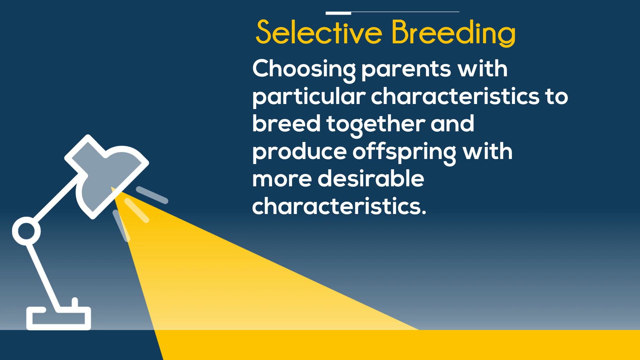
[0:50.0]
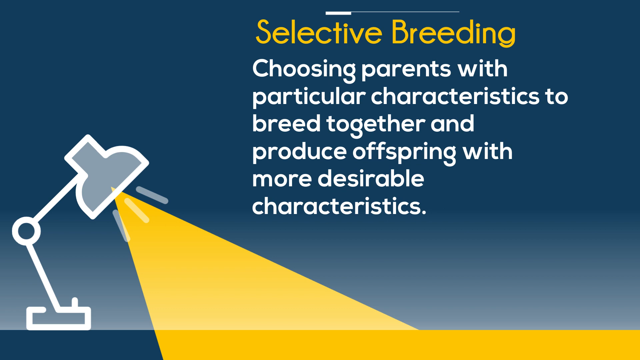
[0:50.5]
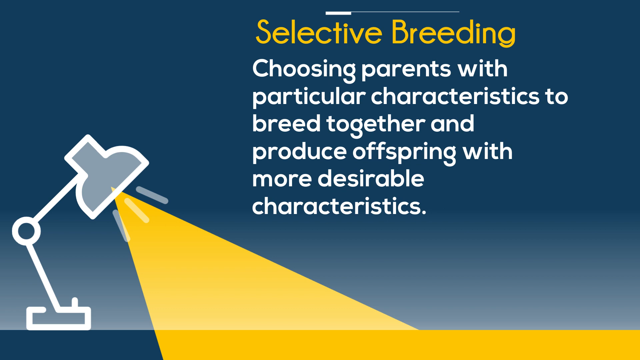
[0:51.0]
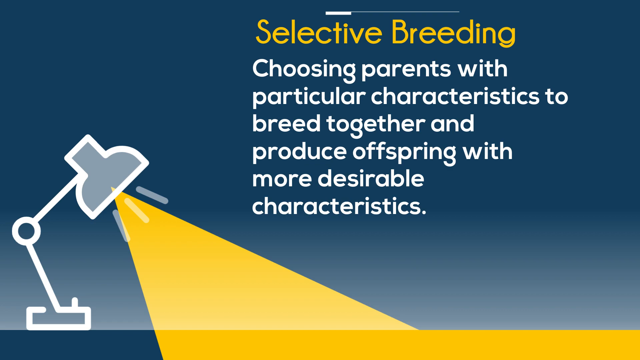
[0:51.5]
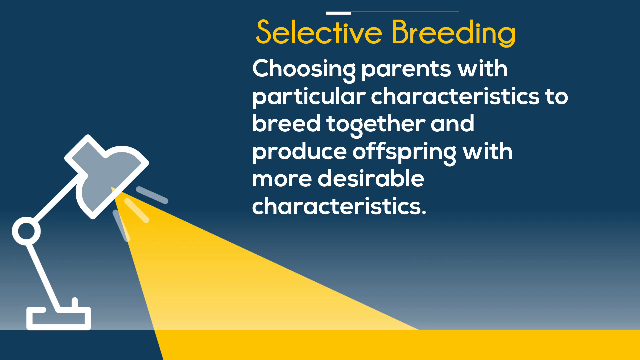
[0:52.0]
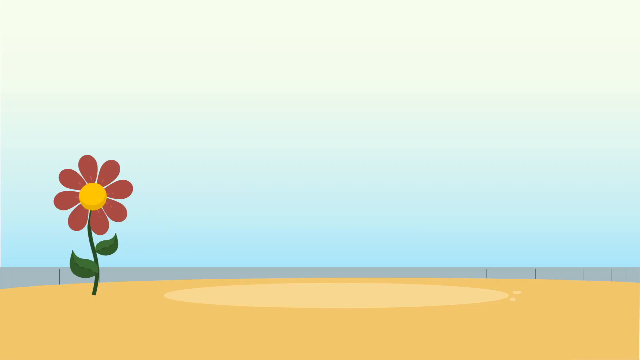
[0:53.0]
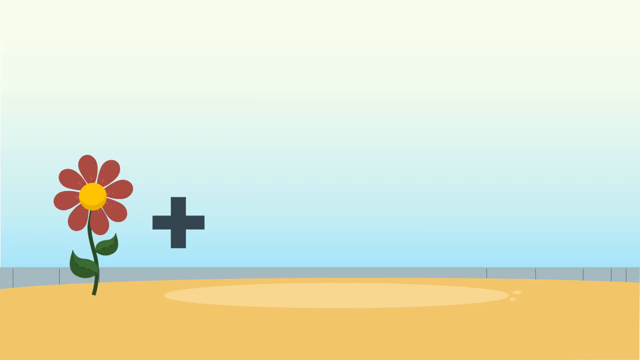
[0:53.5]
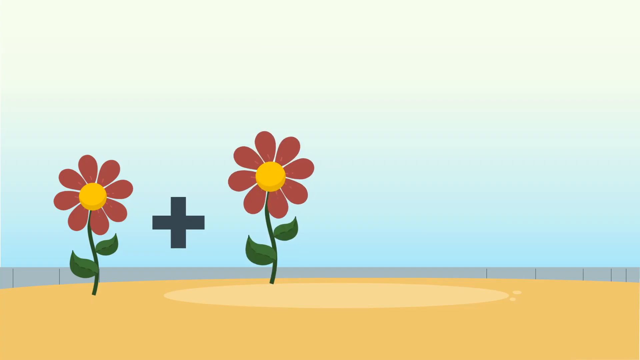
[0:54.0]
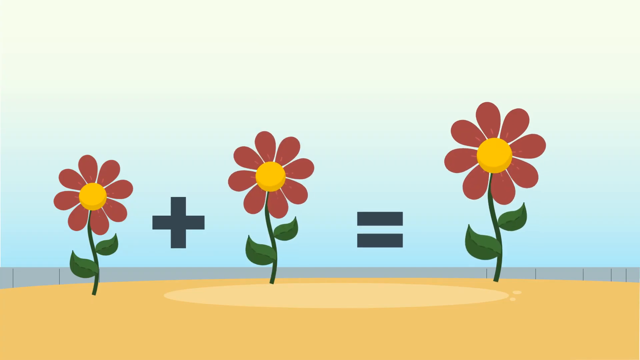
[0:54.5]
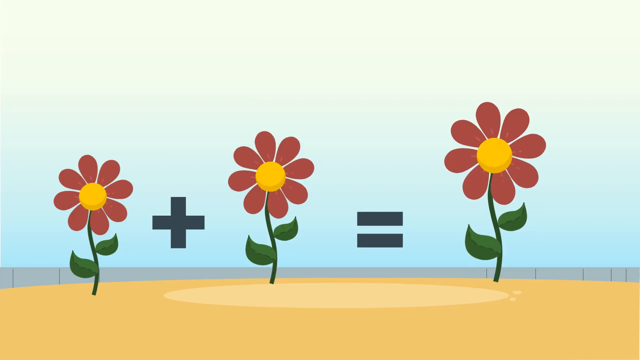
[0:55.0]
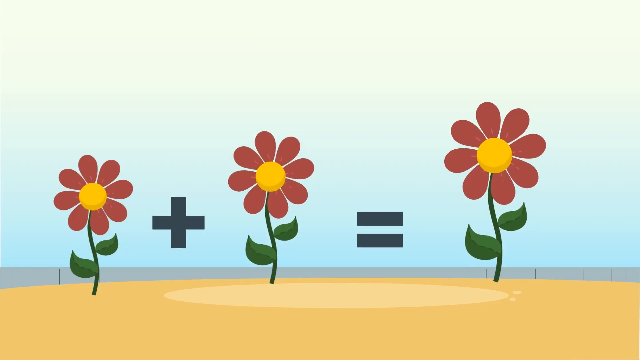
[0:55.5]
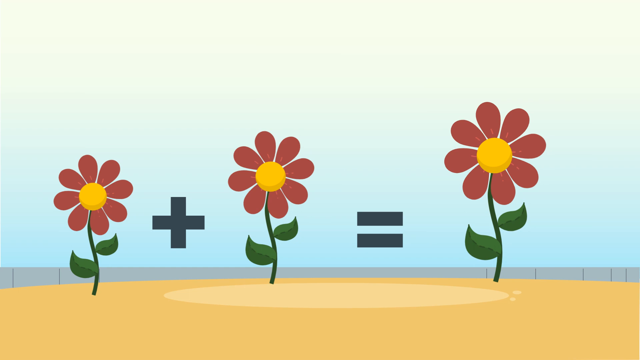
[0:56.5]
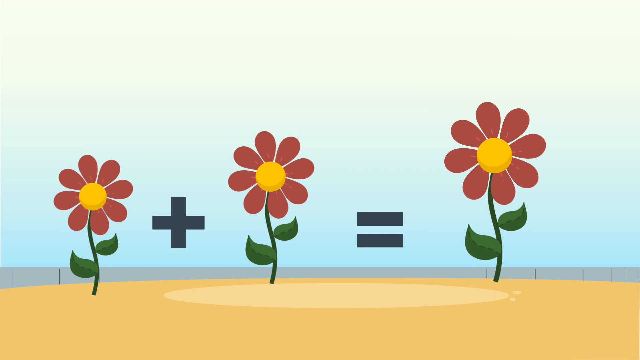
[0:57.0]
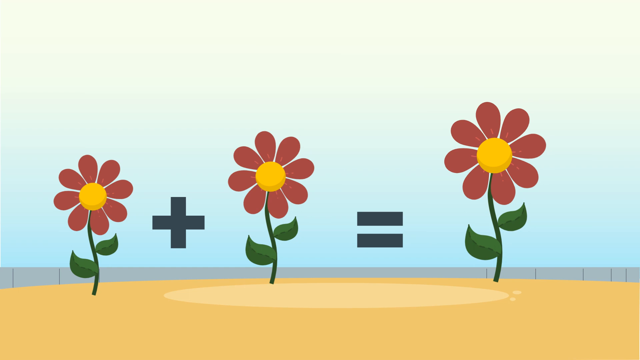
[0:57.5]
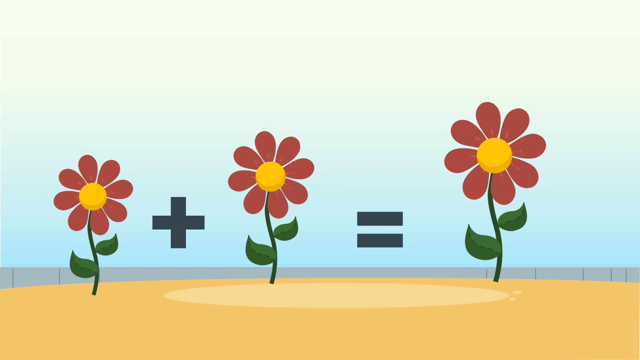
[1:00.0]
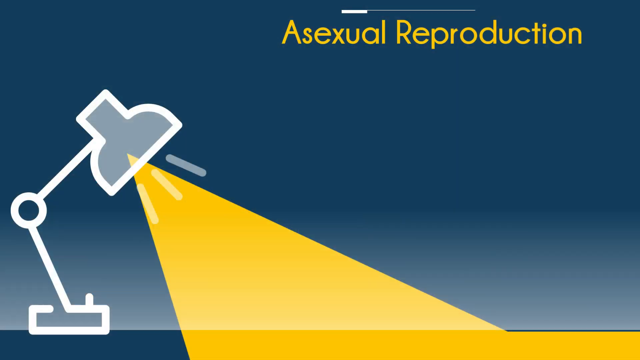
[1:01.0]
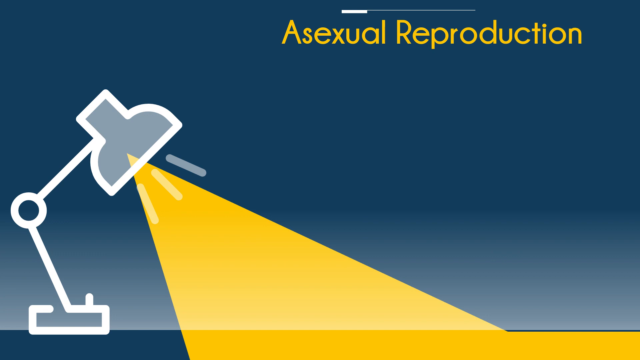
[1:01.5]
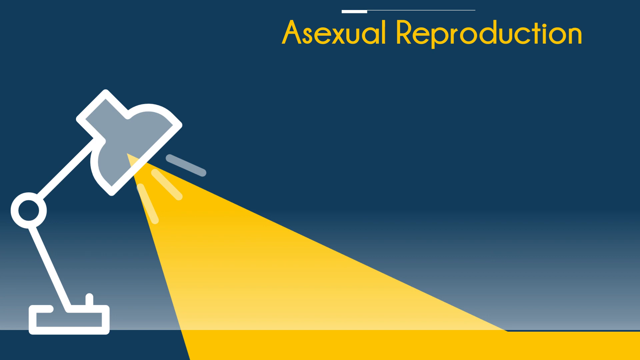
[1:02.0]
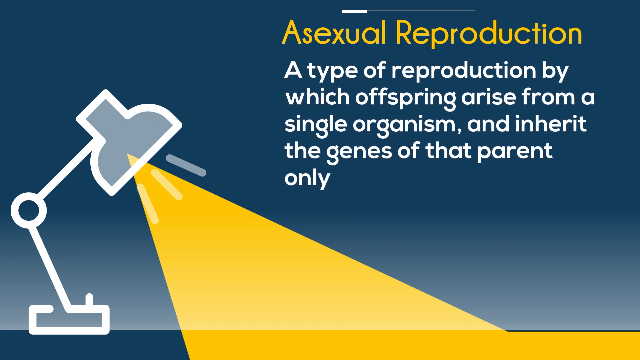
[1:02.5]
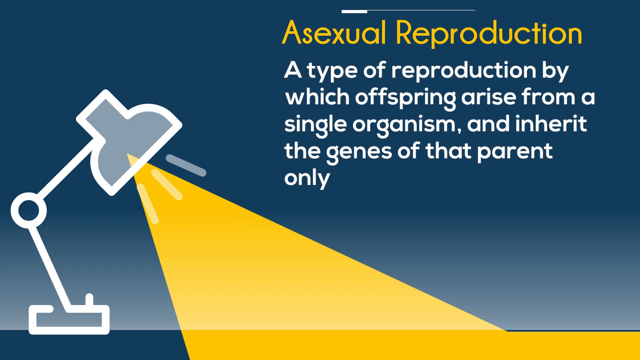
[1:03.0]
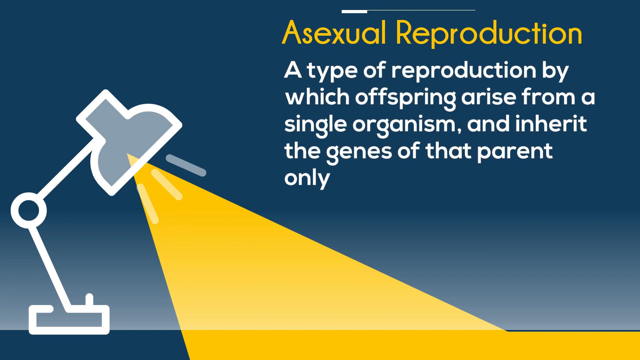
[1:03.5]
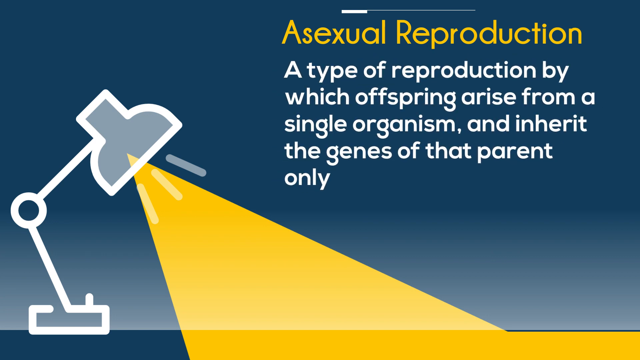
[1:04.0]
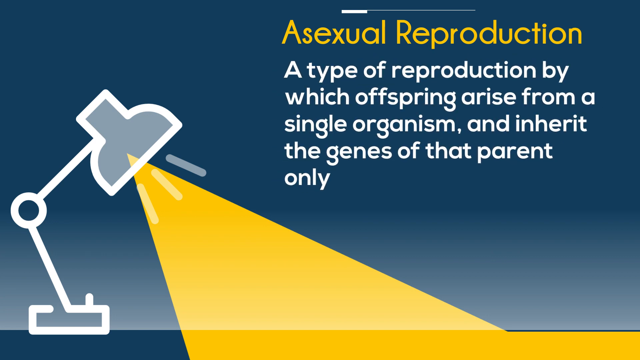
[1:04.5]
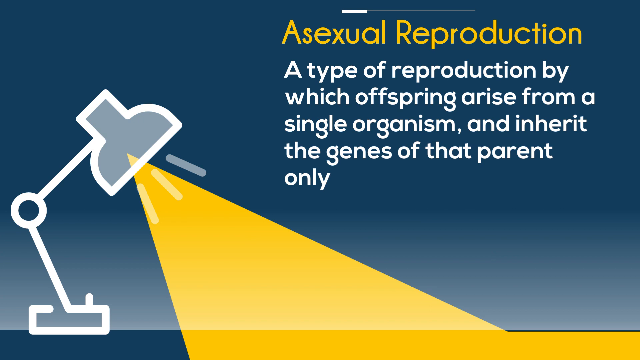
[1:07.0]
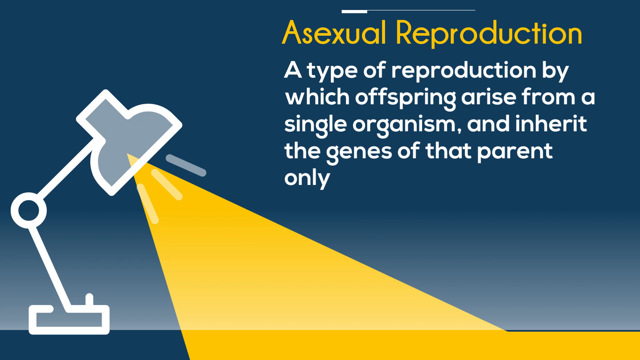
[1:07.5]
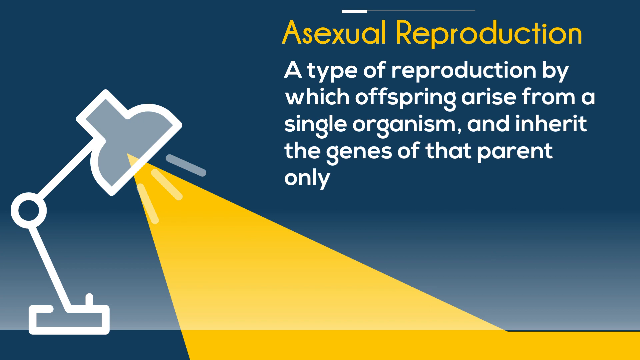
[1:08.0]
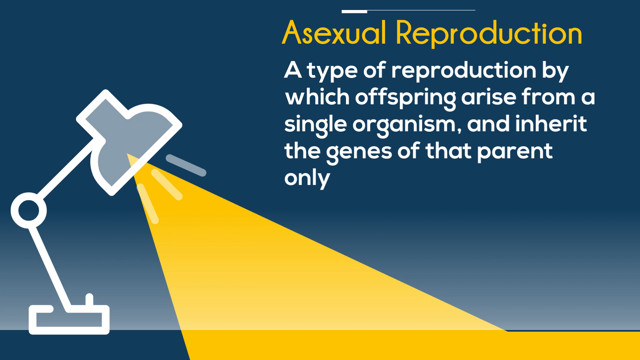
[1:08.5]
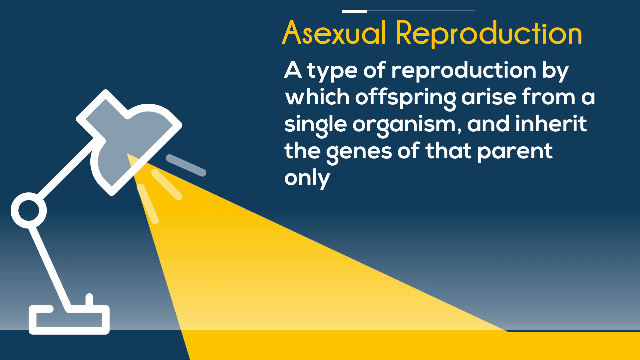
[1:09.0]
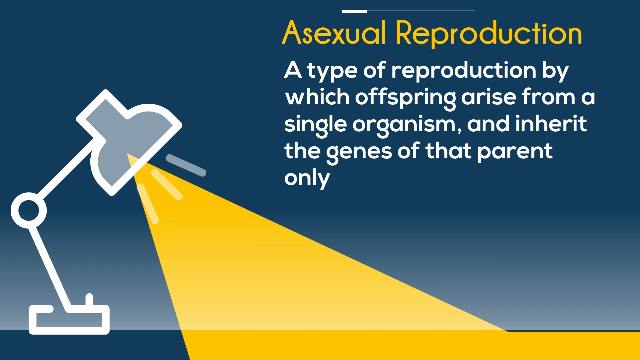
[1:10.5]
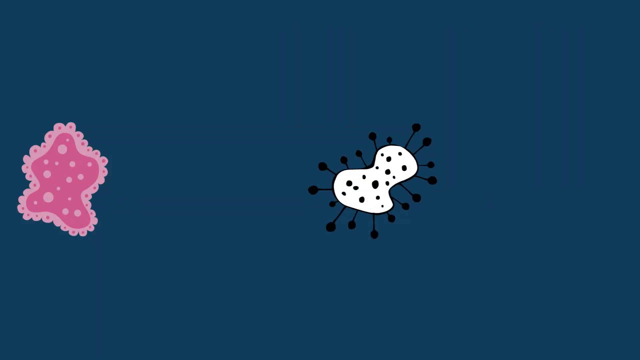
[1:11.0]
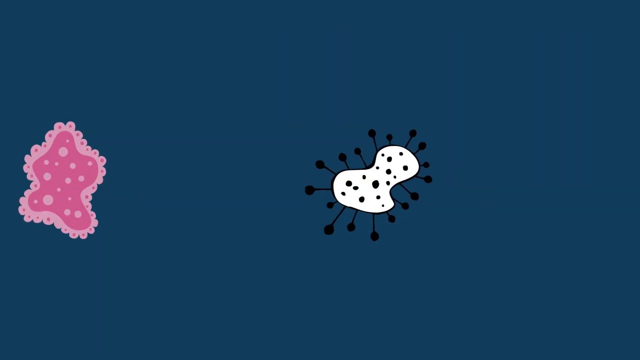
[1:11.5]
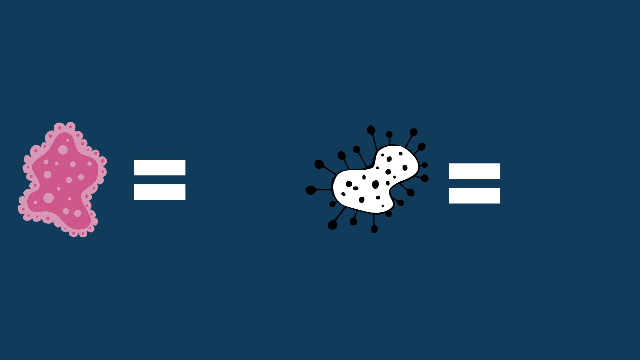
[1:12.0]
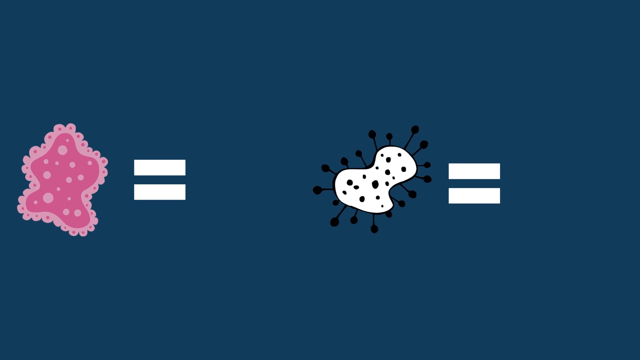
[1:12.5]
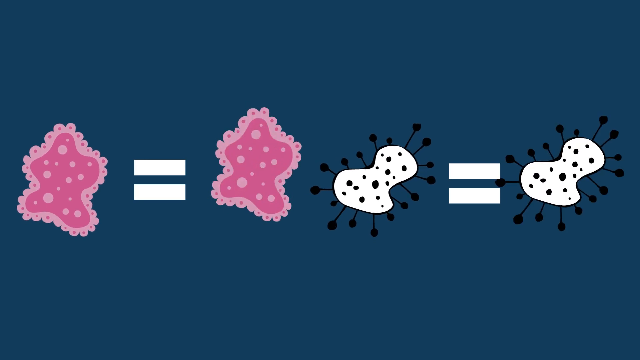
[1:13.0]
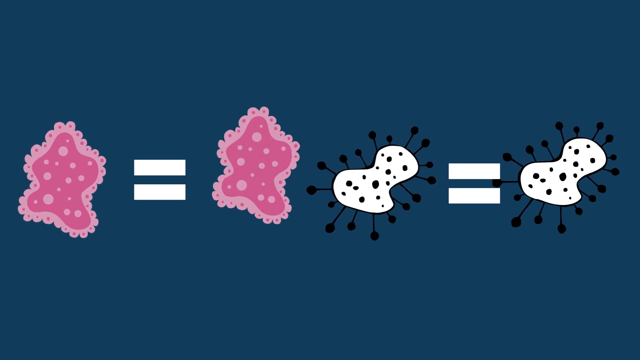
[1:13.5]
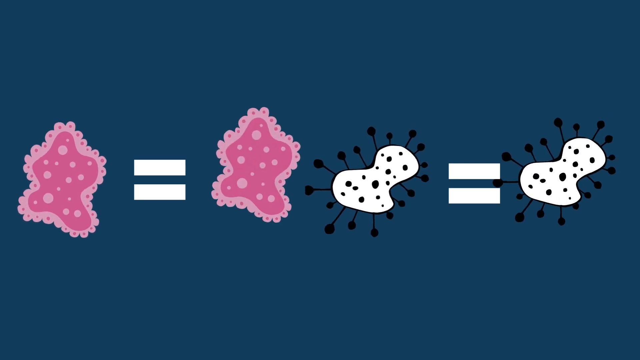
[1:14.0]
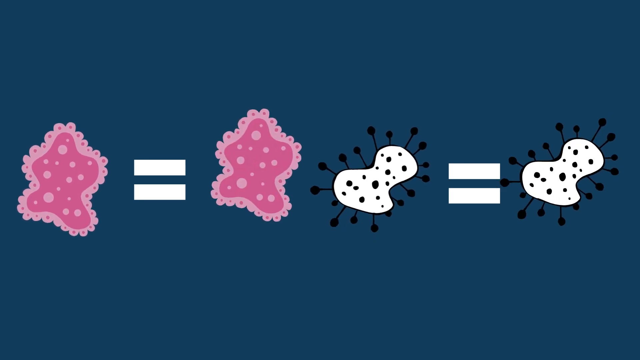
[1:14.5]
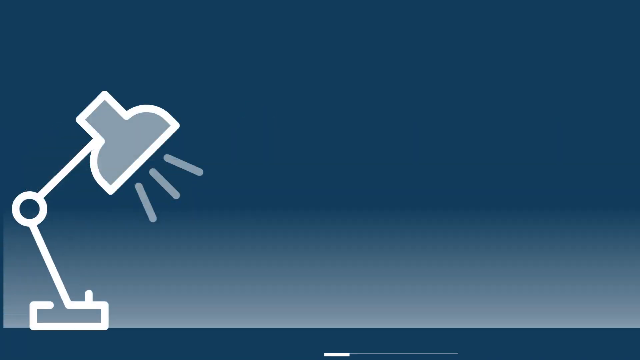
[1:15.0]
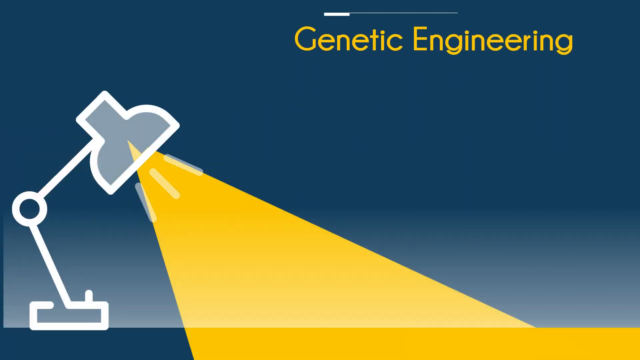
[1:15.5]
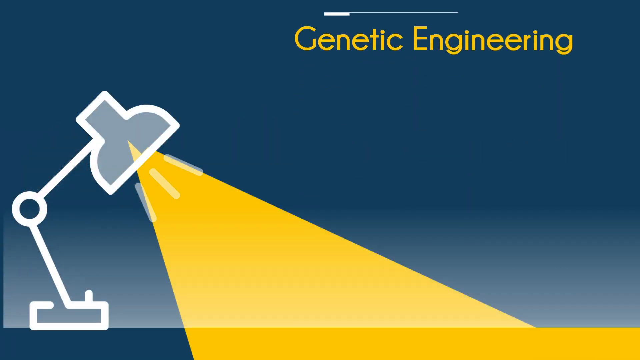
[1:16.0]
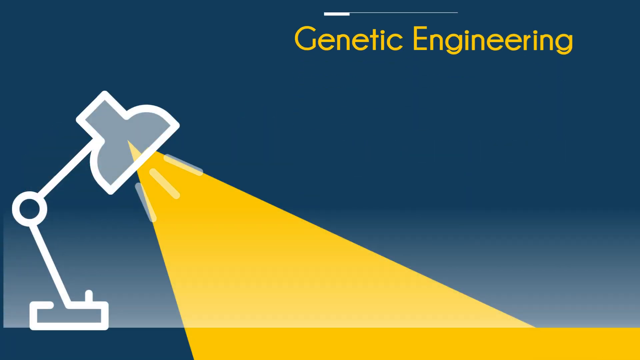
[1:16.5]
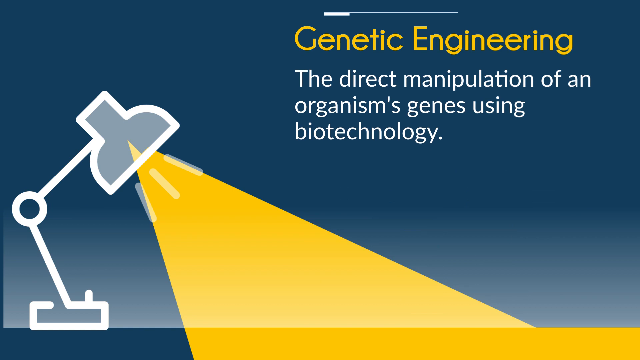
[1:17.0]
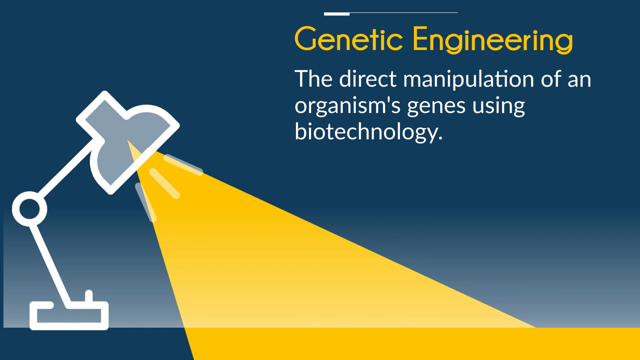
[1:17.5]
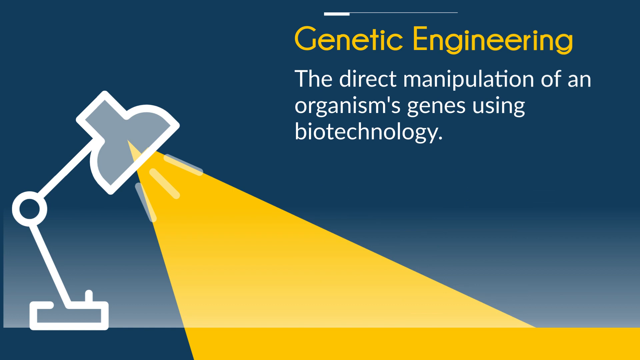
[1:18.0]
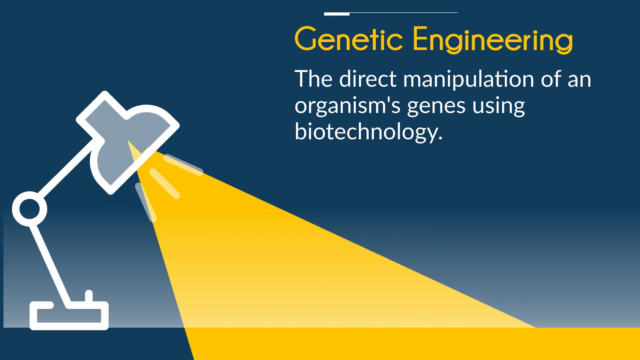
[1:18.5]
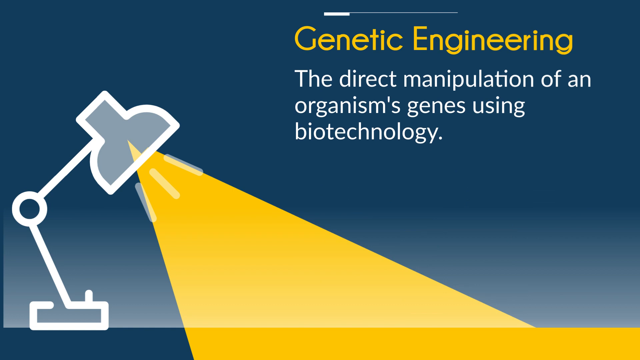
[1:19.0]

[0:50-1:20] The selective breeding process continues, with parents with particular characteristics chosen to breed together and produce offspring with more desirable characteristics. An example apparently shows a flower plus a flower equalling a flower. Next comes asexual reproduction, defined as a type of reproduction by which offspring arise from a single organism and inherit the genes of that parent. Its example shows a flower equal to a flower, just one kind of flower.